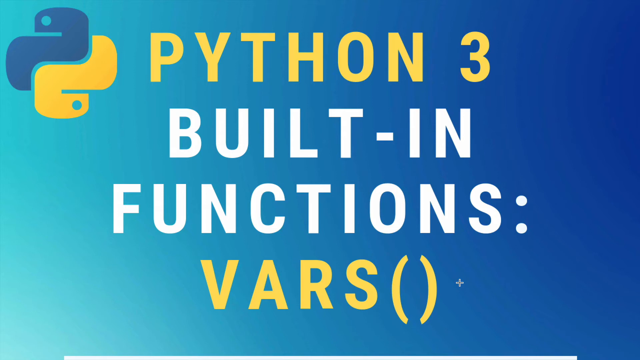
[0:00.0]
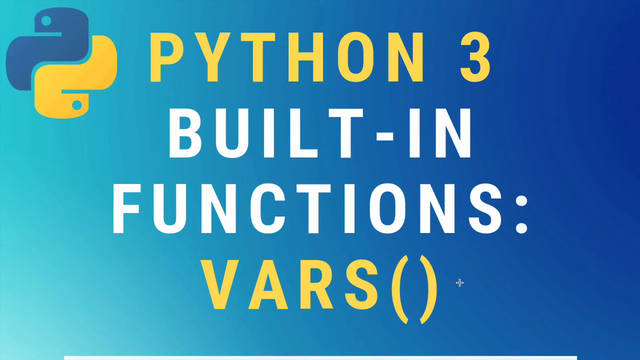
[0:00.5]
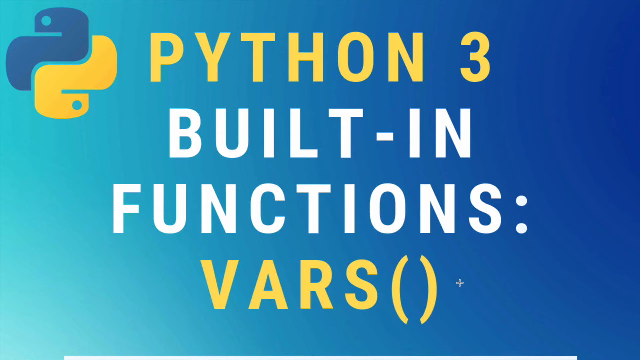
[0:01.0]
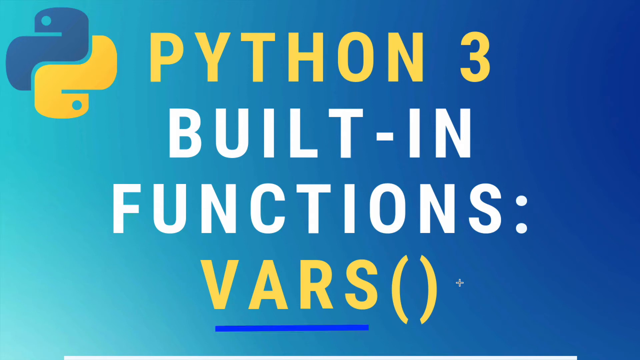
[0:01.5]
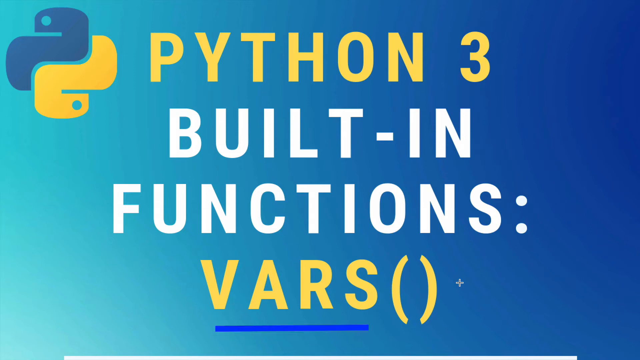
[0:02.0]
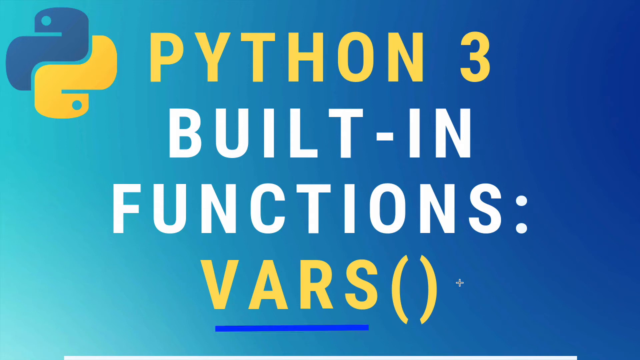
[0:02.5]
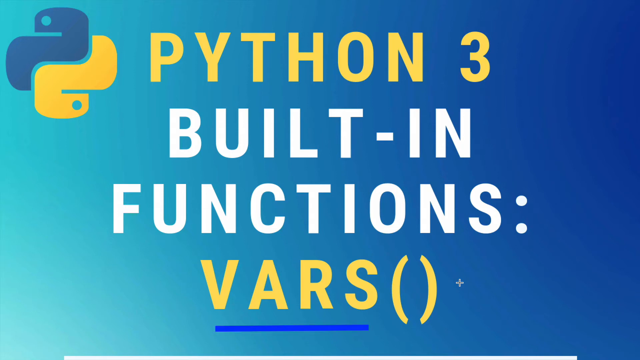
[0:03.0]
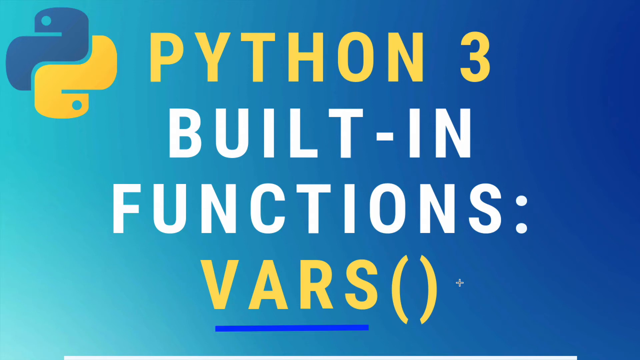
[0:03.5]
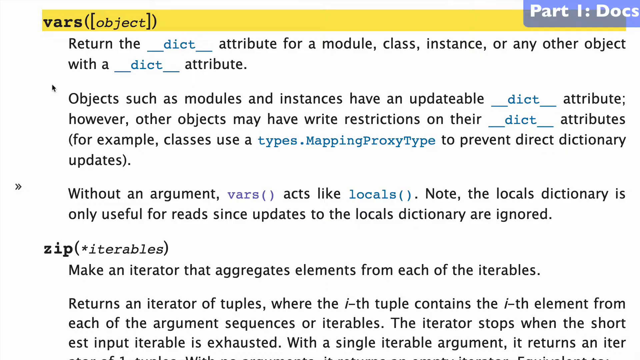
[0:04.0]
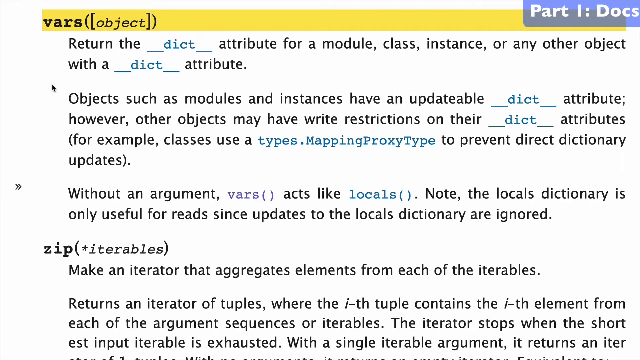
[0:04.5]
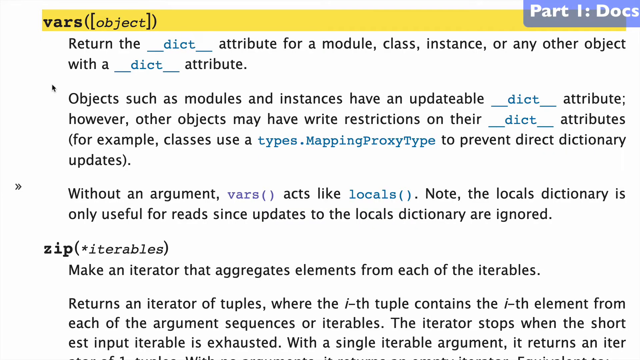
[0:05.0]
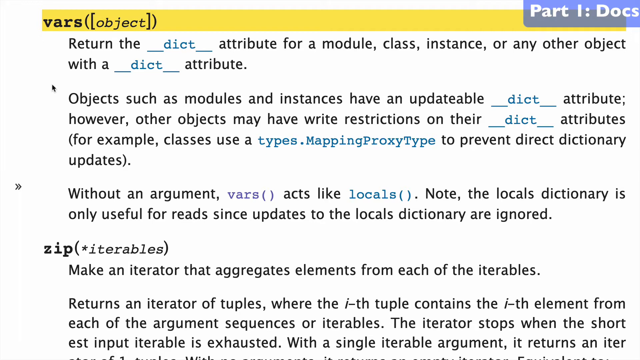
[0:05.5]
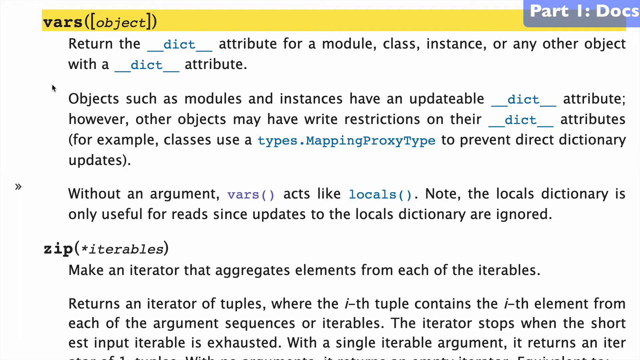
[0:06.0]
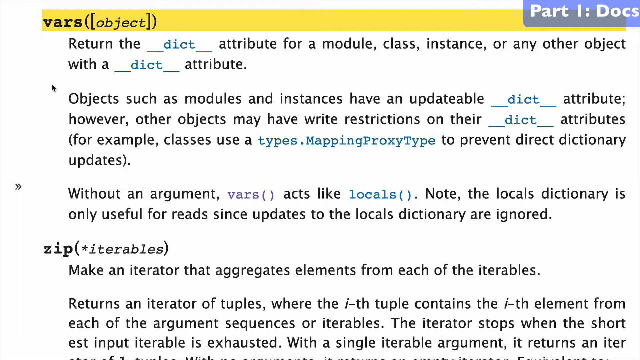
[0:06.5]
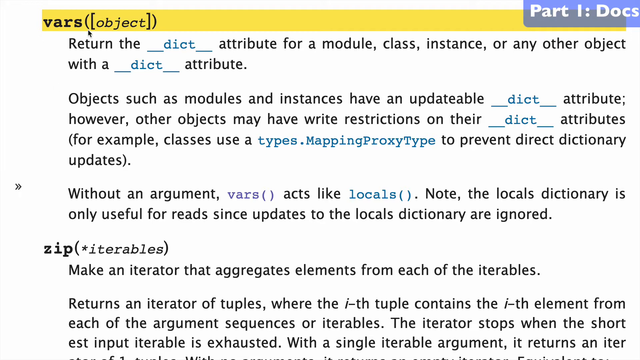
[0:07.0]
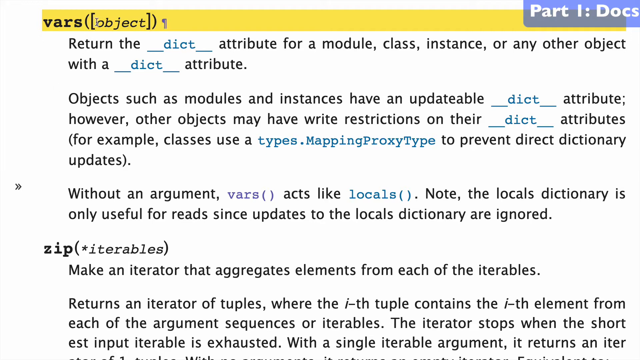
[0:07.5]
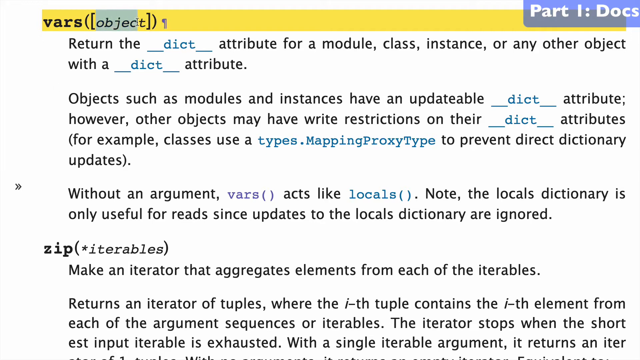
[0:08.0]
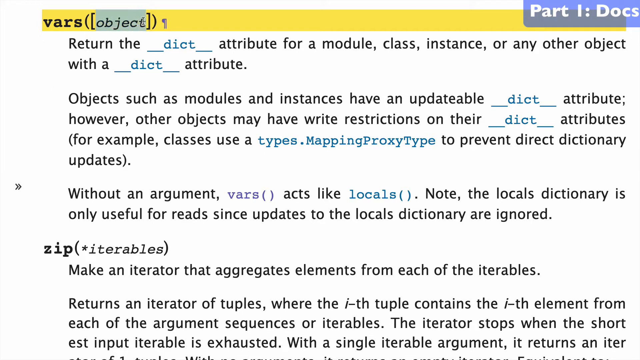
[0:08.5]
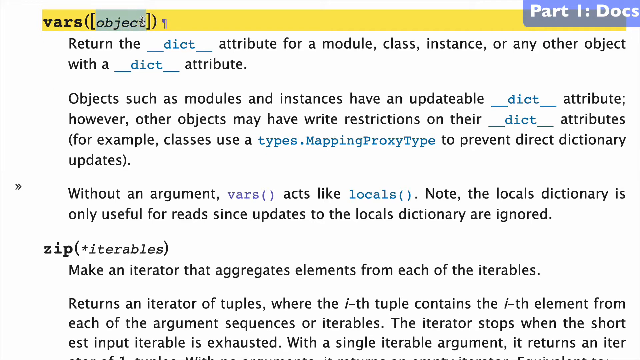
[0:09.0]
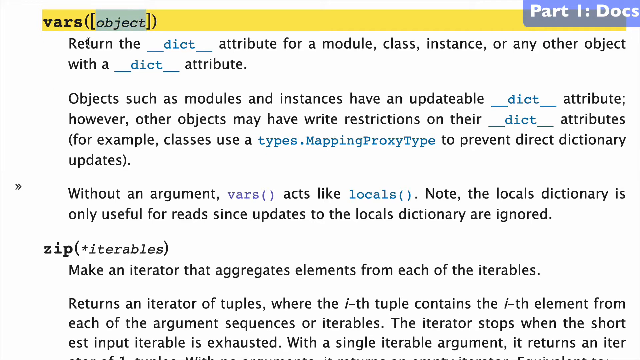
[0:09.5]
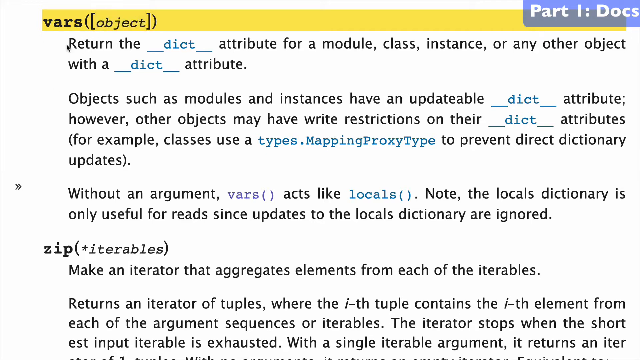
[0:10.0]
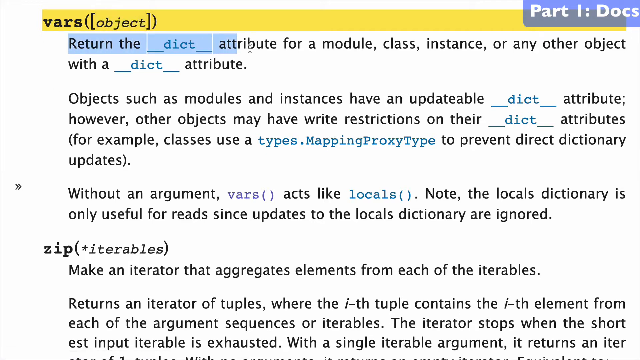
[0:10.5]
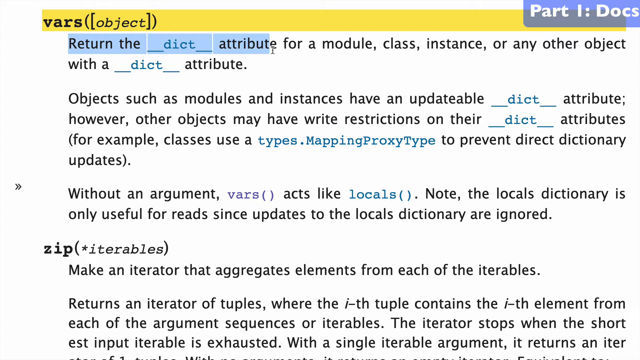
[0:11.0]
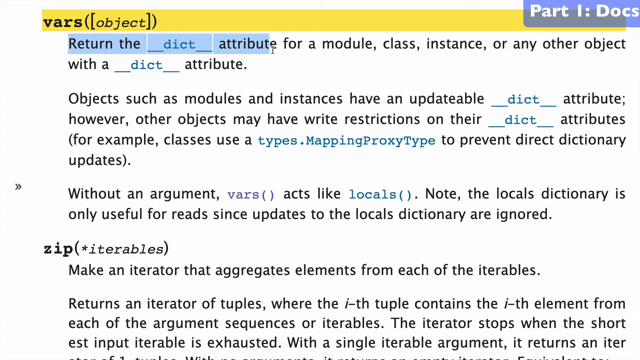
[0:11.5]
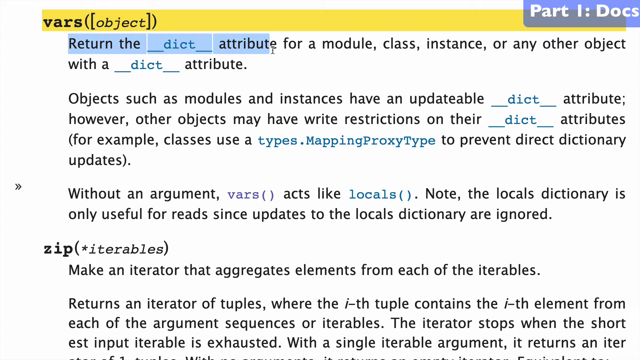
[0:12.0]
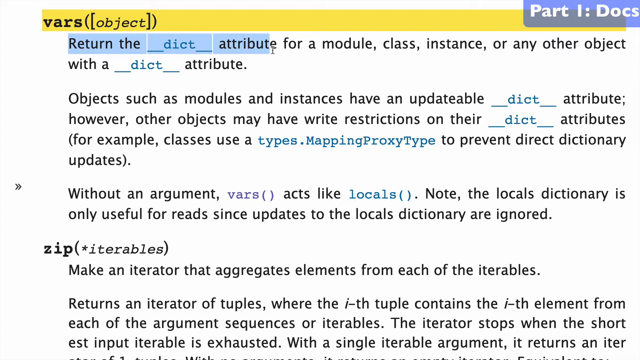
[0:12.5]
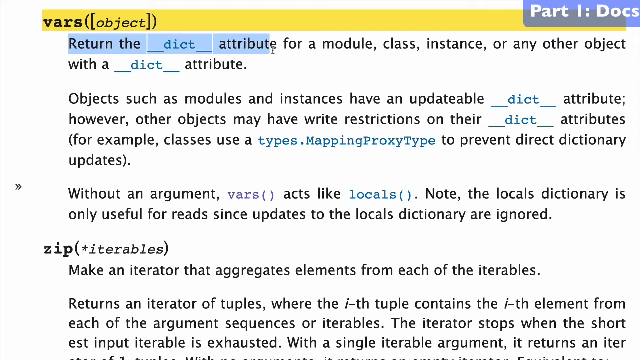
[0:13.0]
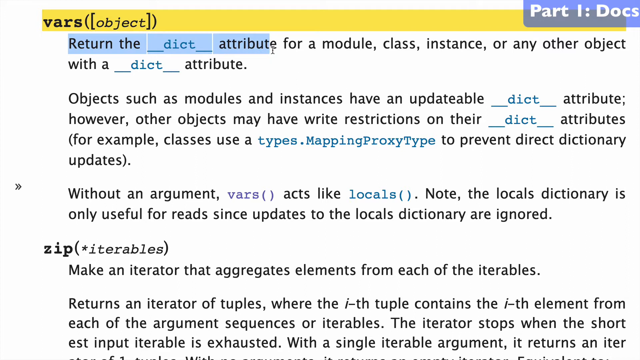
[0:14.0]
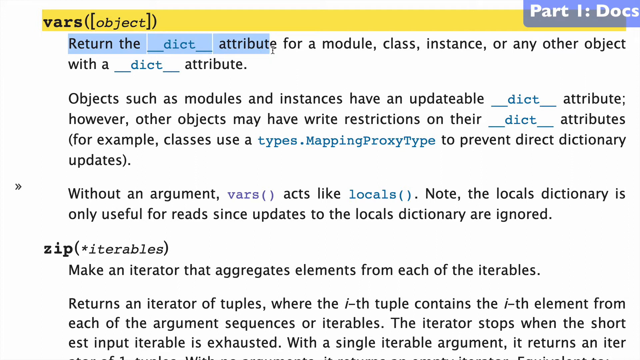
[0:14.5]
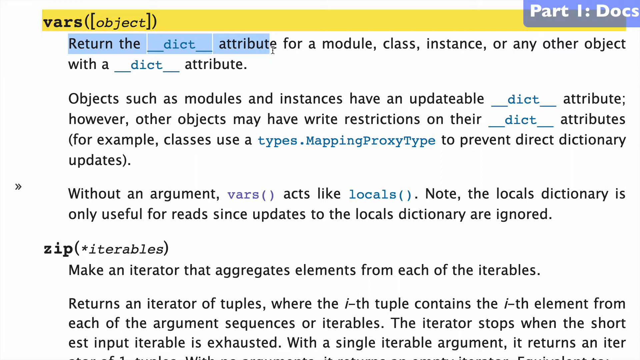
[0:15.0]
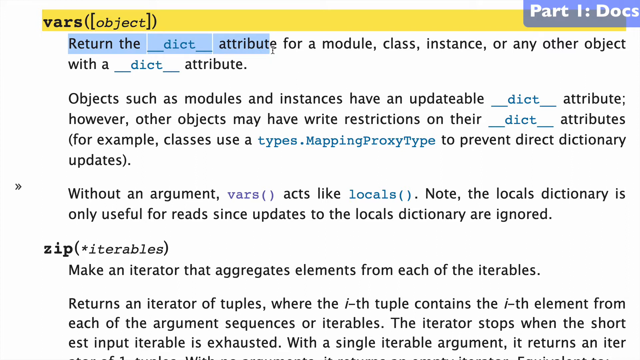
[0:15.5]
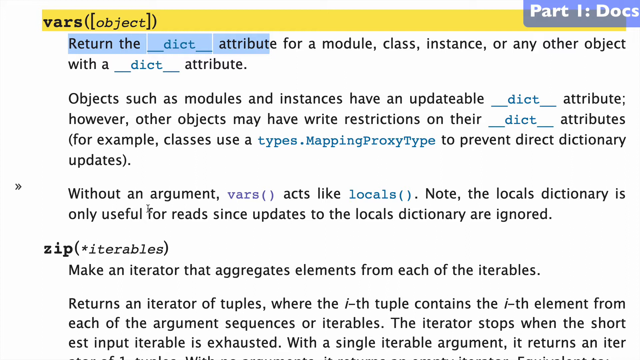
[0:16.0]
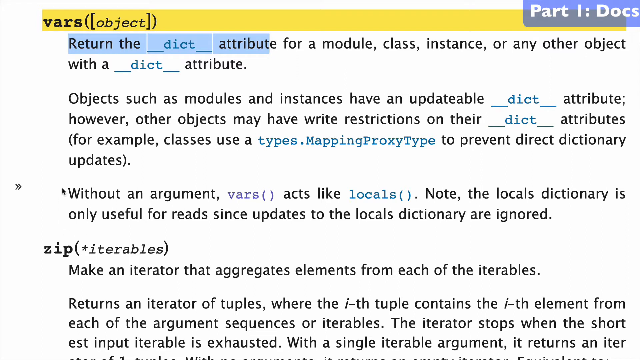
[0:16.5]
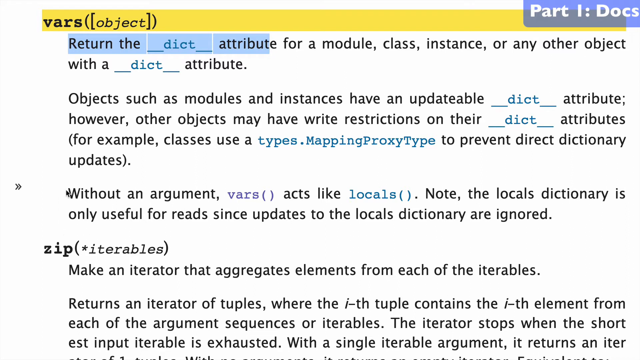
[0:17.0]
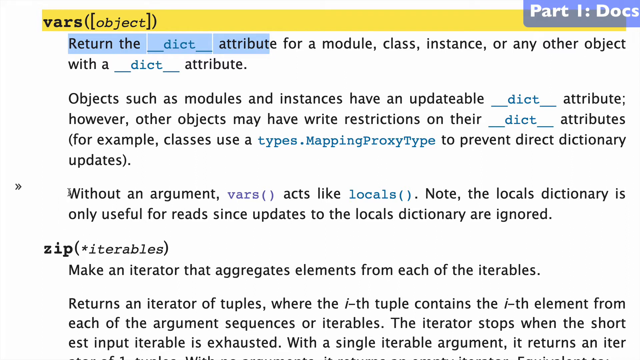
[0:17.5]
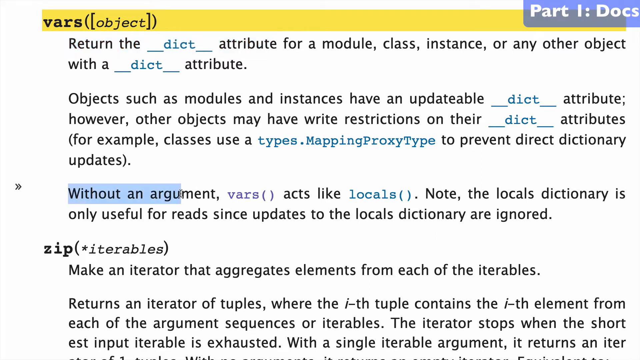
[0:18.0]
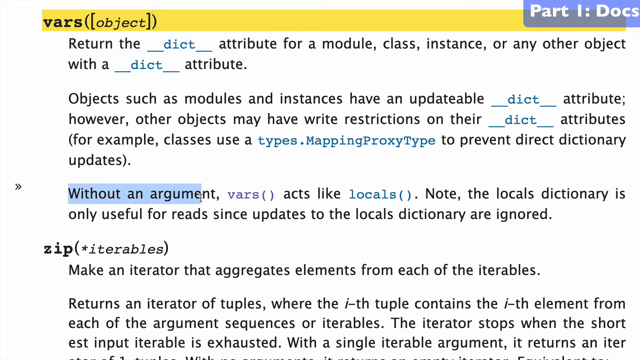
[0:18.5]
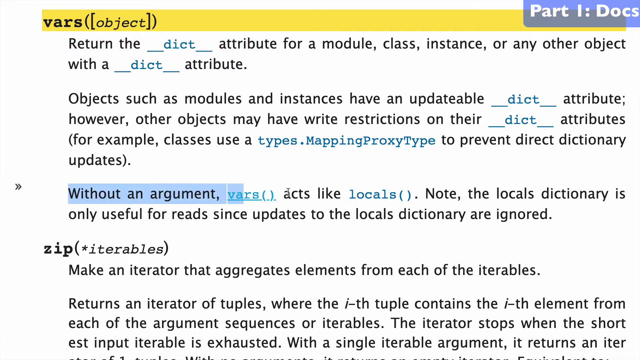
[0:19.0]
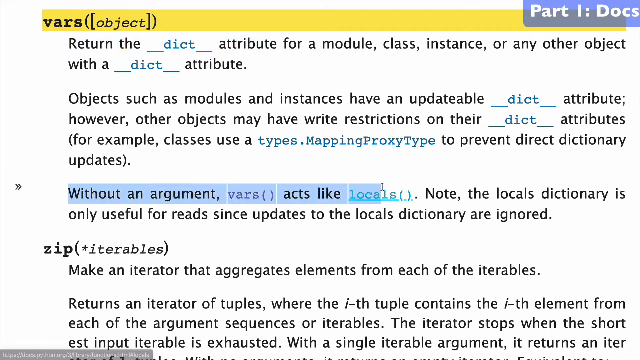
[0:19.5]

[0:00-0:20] The background is an ombre that starts as a light green and shifts all the way to blue. A yellow title is spelled "P-Y-T-H-O-N-E" with a 3. Beneath it is a white dash, beneath that the word "functions", and beneath that a yellow "vars" with parentheses. A pop-up then appears defining vars: "return the dict attribute for a module, class, instance, or any other object with a dict attribute." Part of this, "return the dict attribute", gets highlighted. Another part is then highlighted, reading "without an argument, vars() acts like locals. Note the locals dictionary is only useful for reads, since updates to the locals dictionary are ignored."